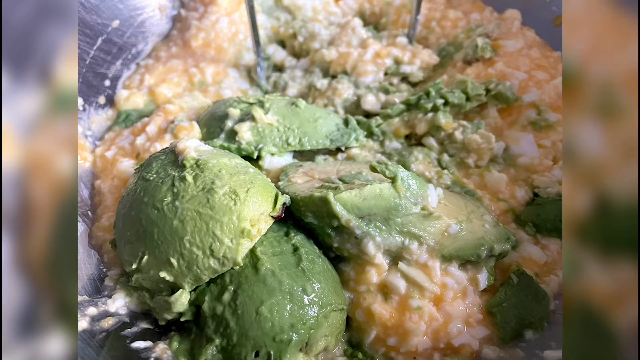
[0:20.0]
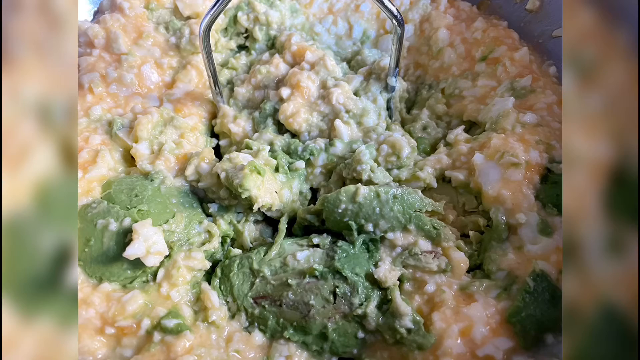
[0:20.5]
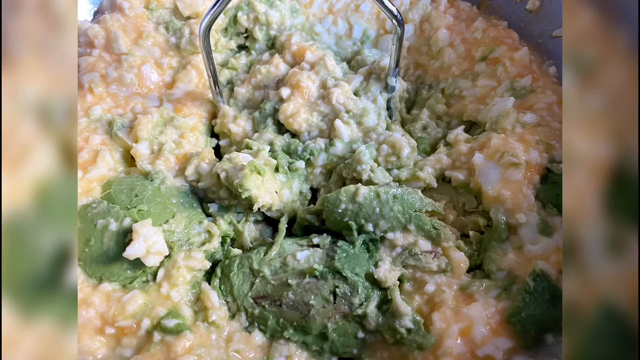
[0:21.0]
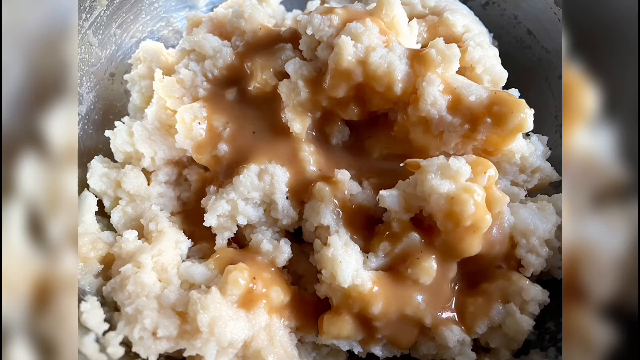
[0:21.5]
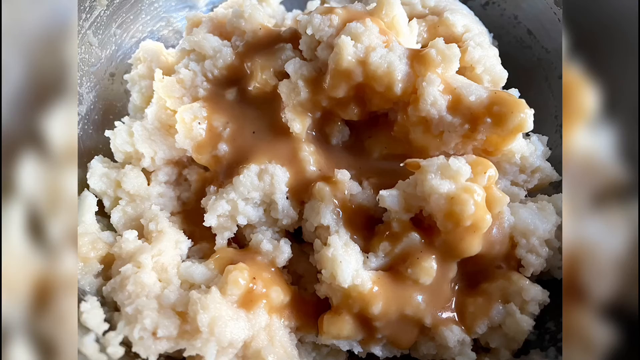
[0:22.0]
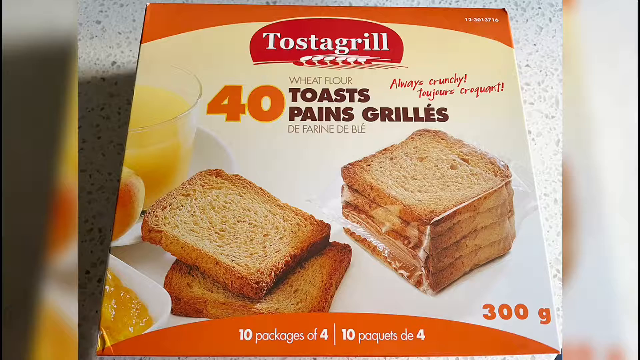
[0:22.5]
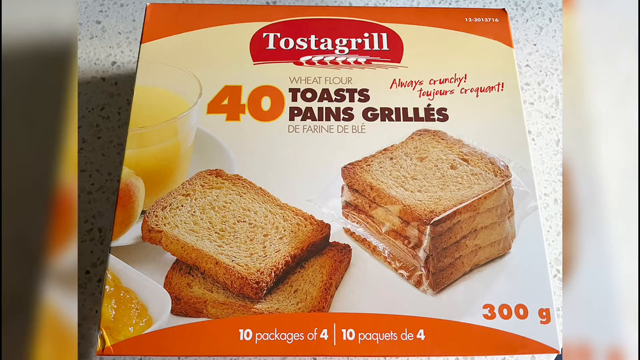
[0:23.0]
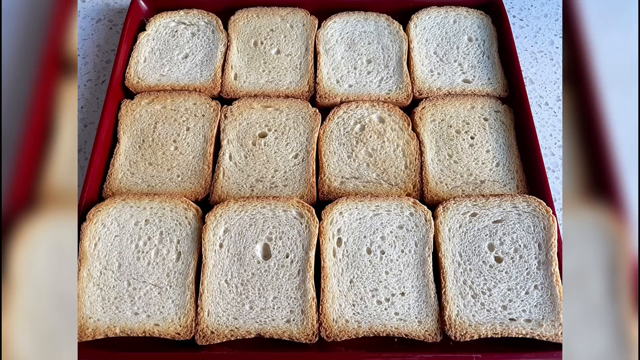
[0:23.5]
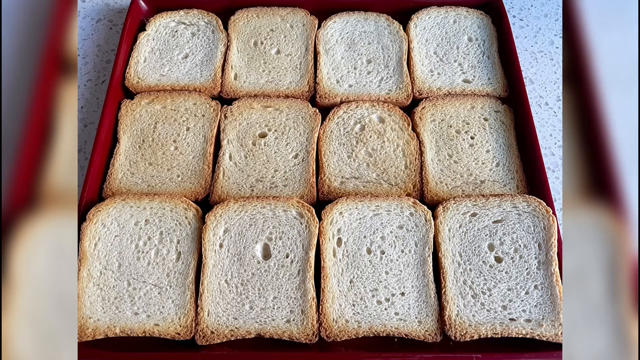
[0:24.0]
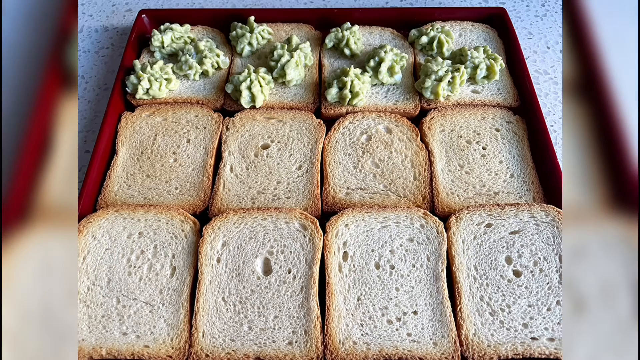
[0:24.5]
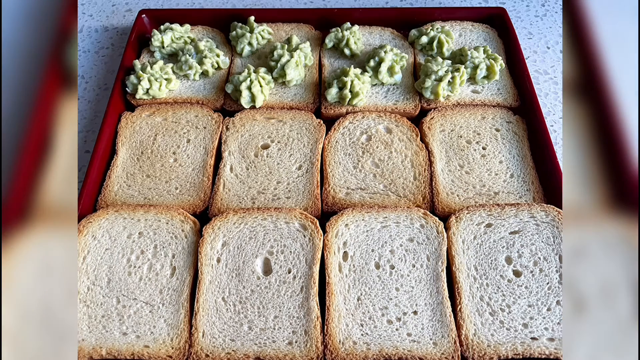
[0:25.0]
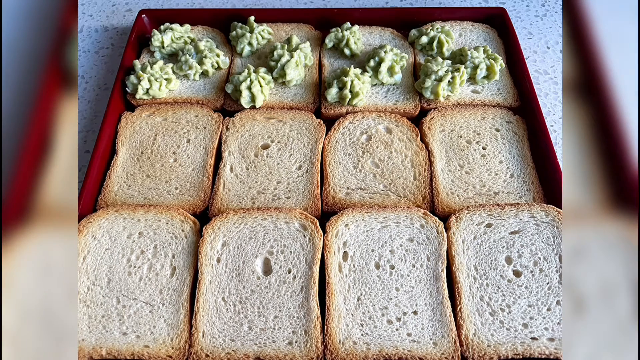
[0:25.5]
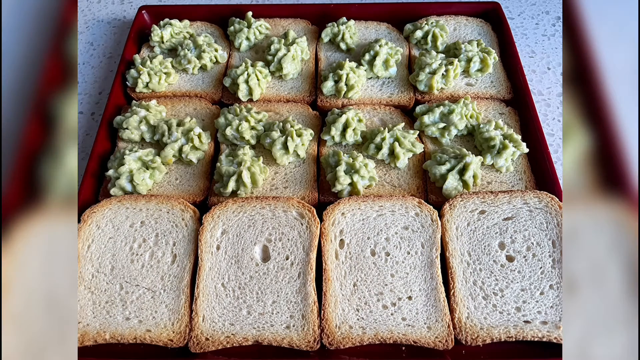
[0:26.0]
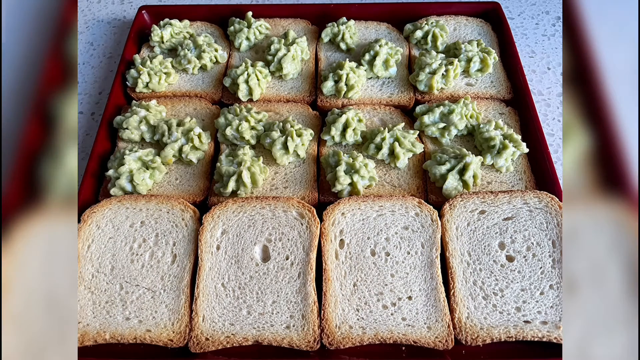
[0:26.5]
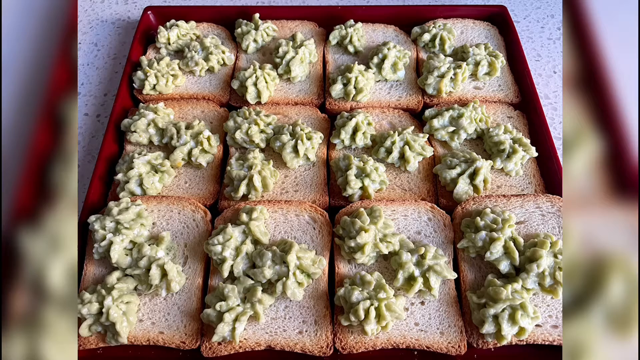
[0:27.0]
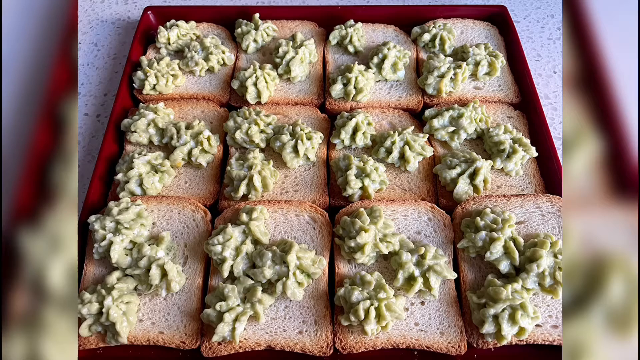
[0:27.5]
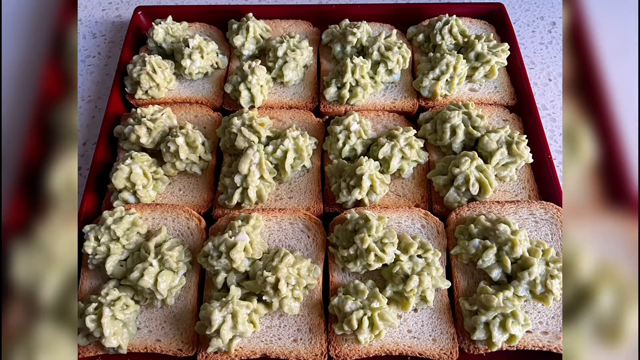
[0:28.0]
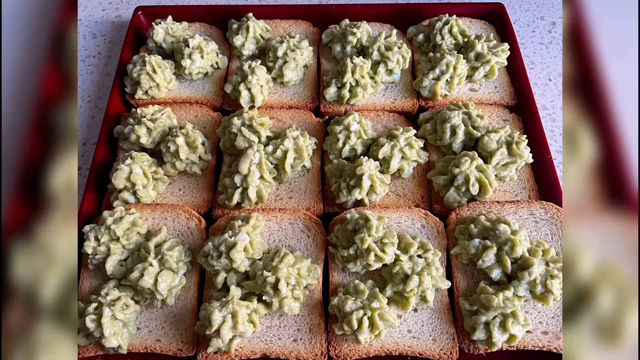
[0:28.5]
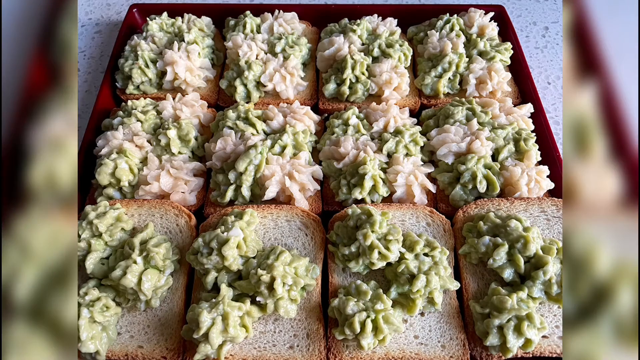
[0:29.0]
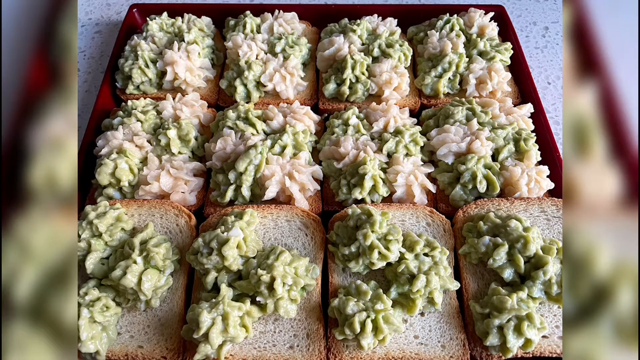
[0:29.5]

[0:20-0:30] Avocados are placed onto the mixture of eggs and white sauce or frosting. A second angle shows the avocados on top of the egg mixture with a utensil mashing the two together, followed by a close-up of the egg and white sauce mixture. Next is a box of bread called toaster grill; the front of the box says "wheat flour, 40 toast pains grilles," and red text in the upper right corner says "always crunchy." An image follows of several pieces of toast in a package and two pieces of toast out in the open, with a glass of orange juice and a bowl to the left of those two pieces; the lower right corner of the frame says "300 grams." Next, 12 pieces of toast are arranged neatly in three rows and four vertical columns in a bread tray placed on a white countertop or tabletop. The egg and avocado mixture is placed on the top row of four pieces of bread, then on the top and middle rows, and then on all three rows and all 12 pieces. The potato mixture is also added on the top, middle and bottom rows of bread.